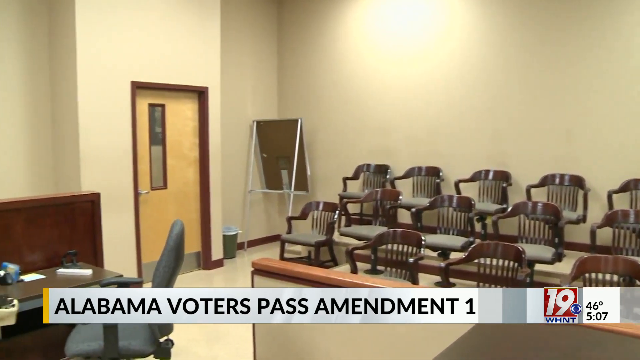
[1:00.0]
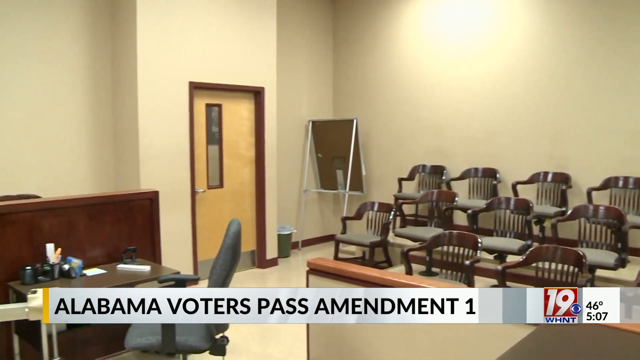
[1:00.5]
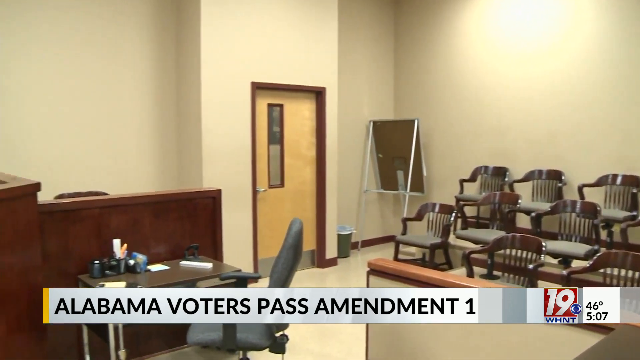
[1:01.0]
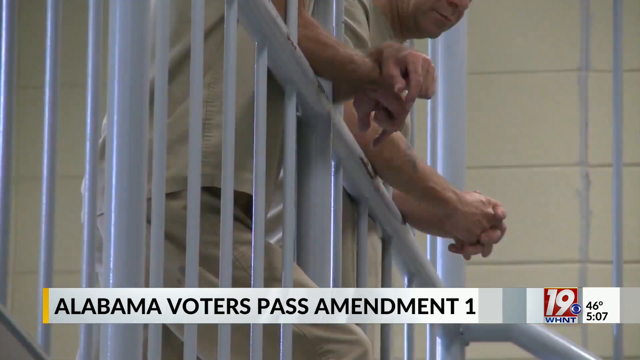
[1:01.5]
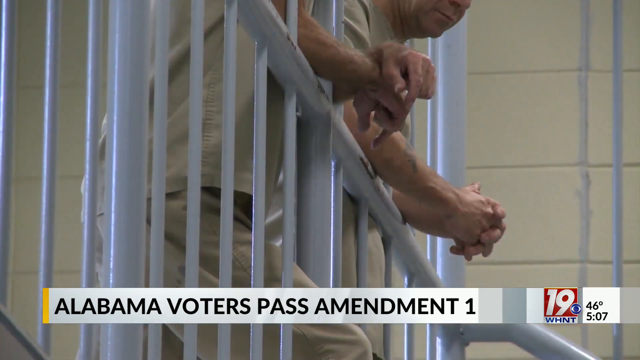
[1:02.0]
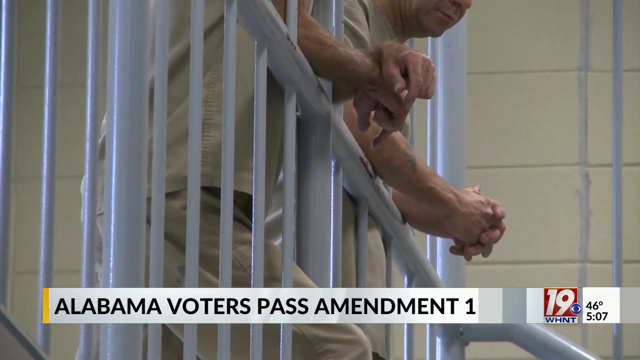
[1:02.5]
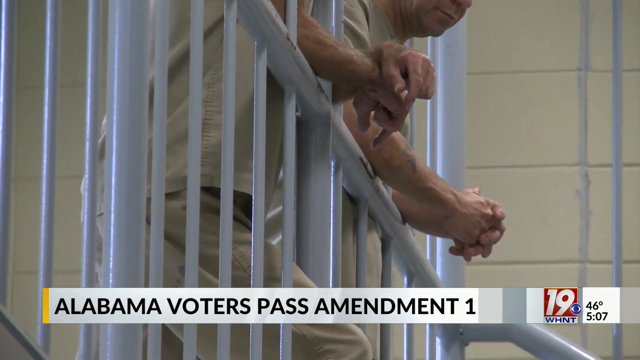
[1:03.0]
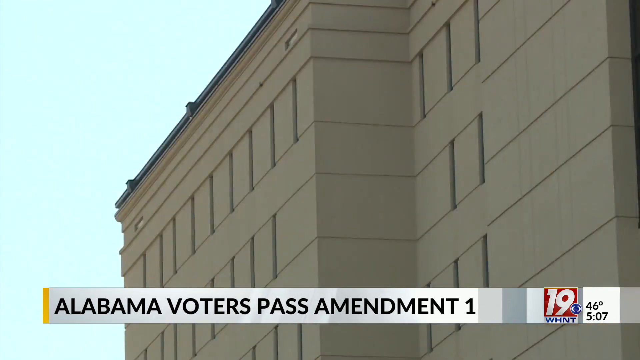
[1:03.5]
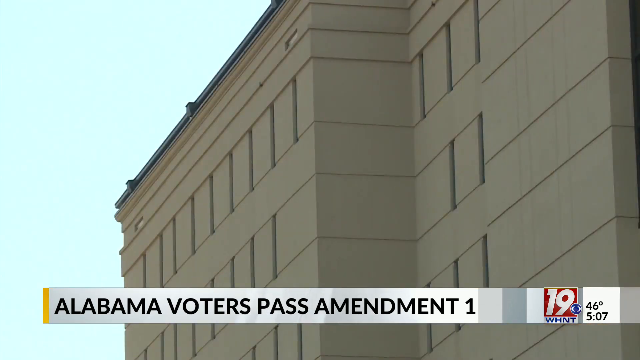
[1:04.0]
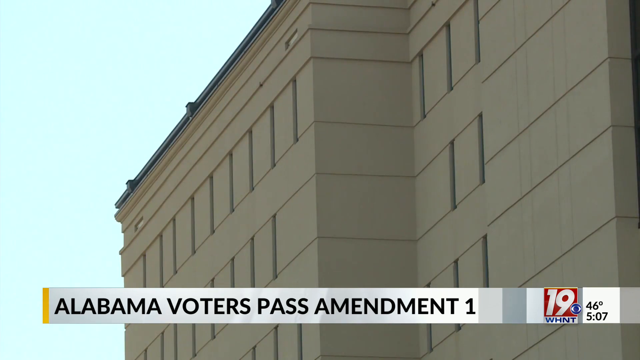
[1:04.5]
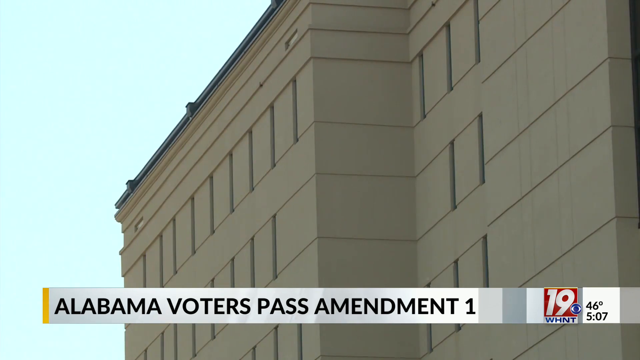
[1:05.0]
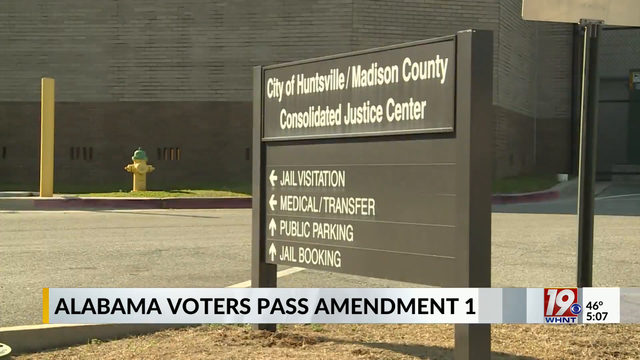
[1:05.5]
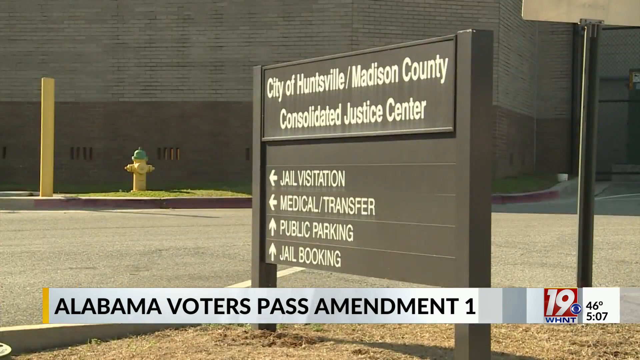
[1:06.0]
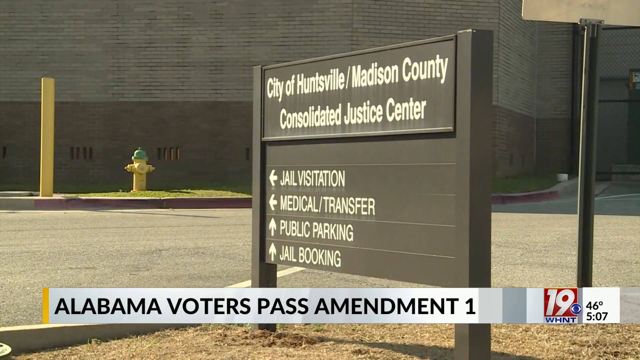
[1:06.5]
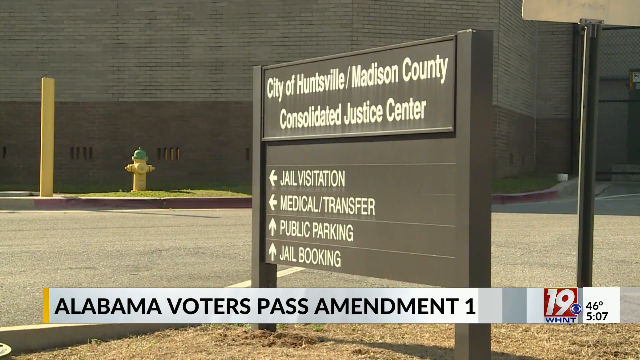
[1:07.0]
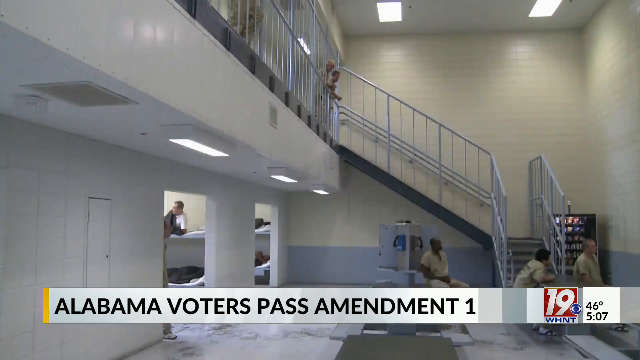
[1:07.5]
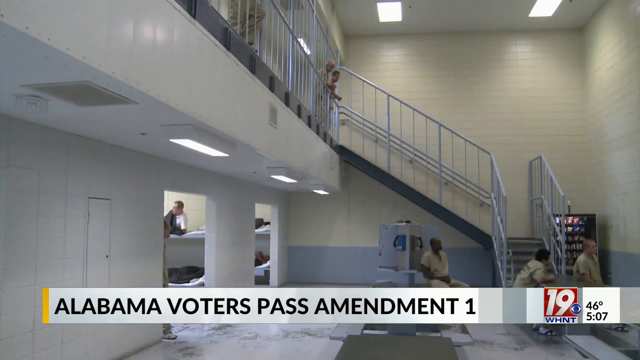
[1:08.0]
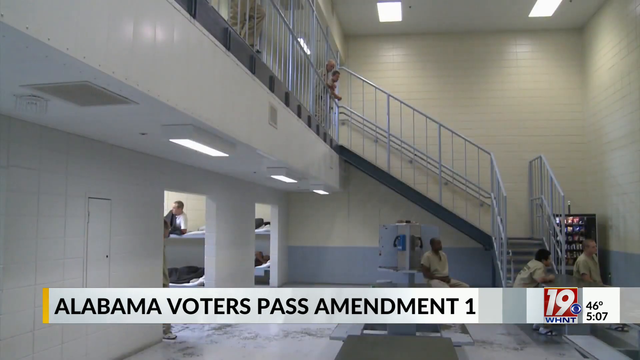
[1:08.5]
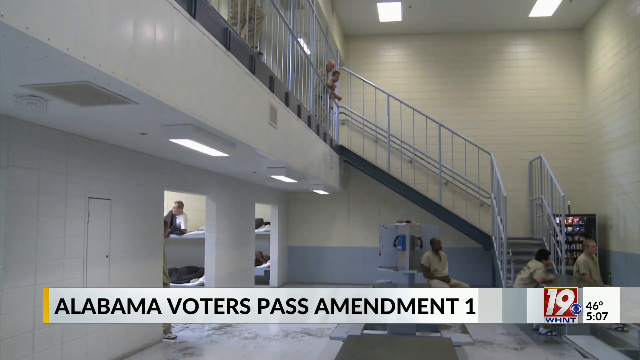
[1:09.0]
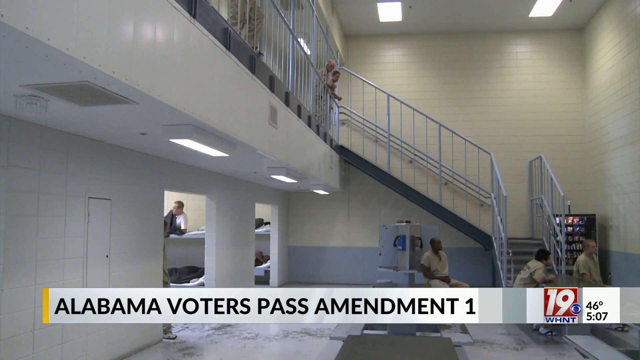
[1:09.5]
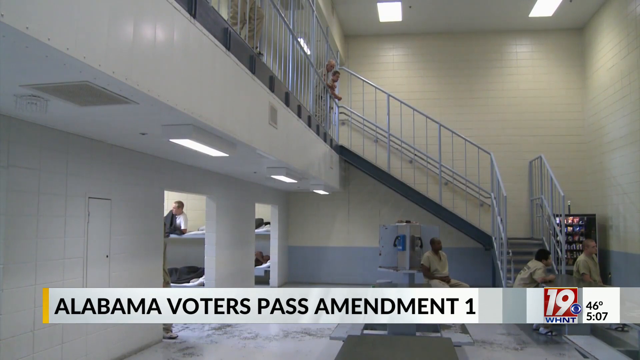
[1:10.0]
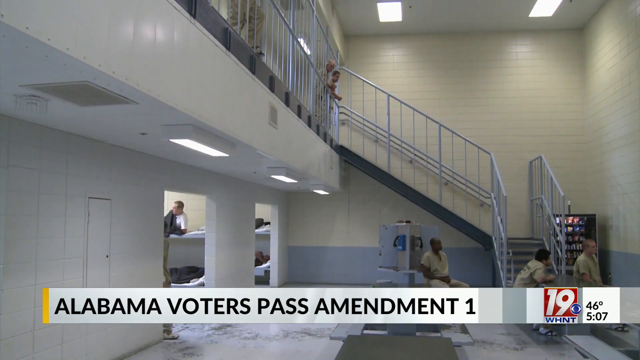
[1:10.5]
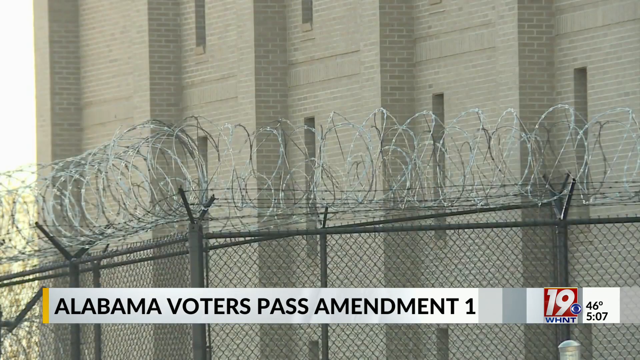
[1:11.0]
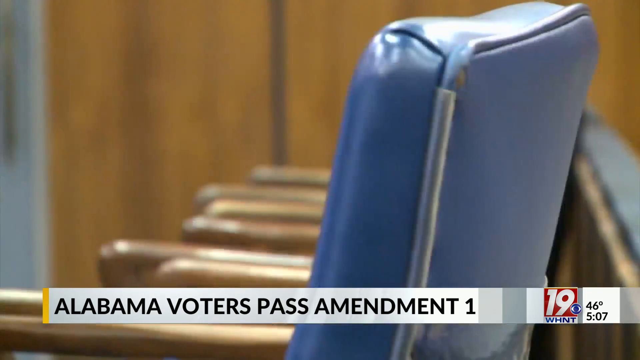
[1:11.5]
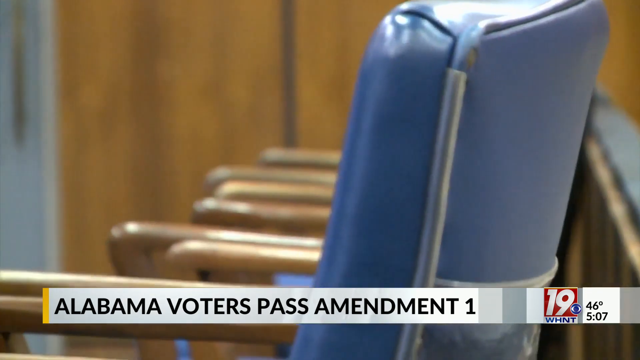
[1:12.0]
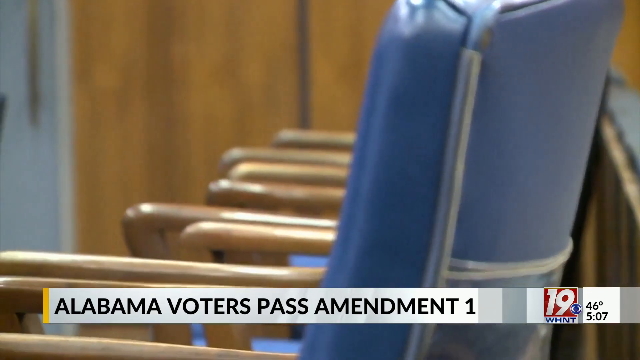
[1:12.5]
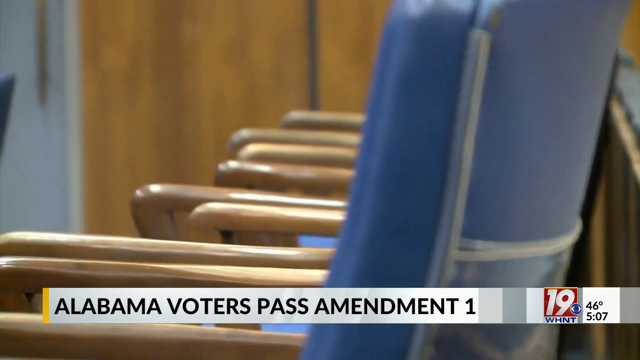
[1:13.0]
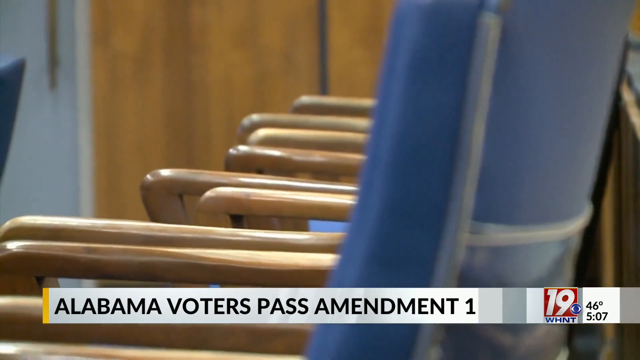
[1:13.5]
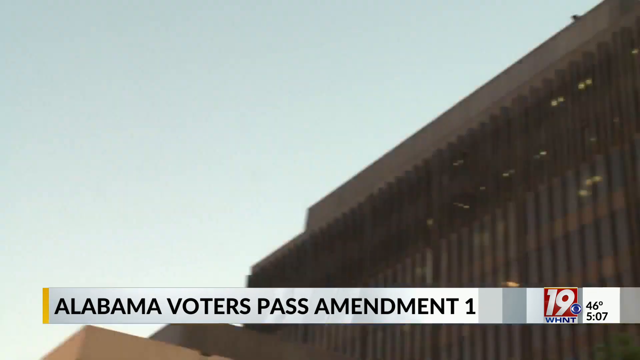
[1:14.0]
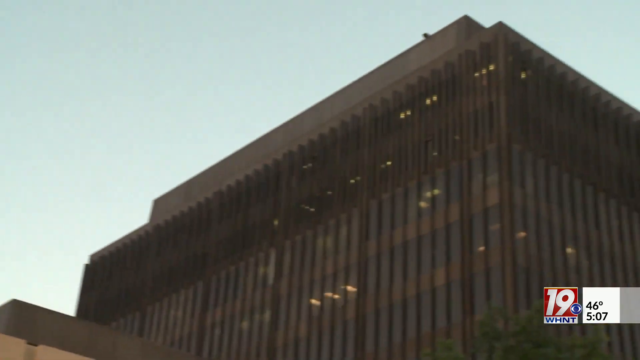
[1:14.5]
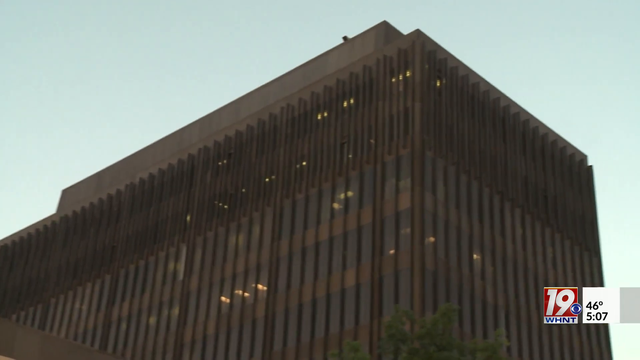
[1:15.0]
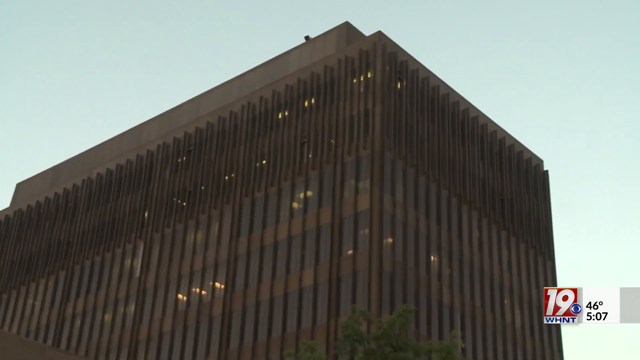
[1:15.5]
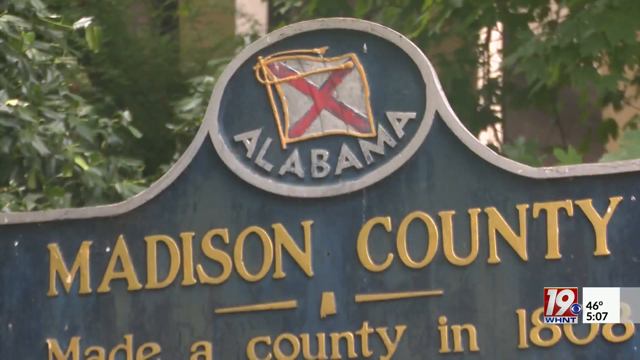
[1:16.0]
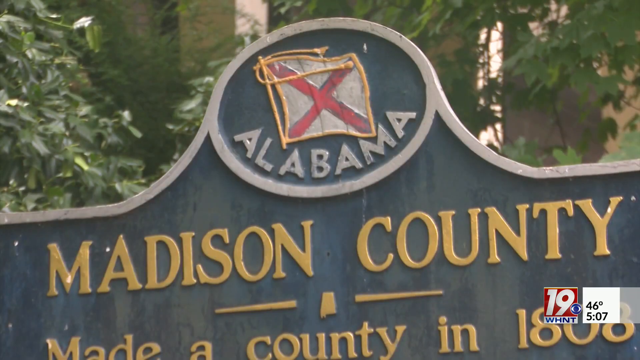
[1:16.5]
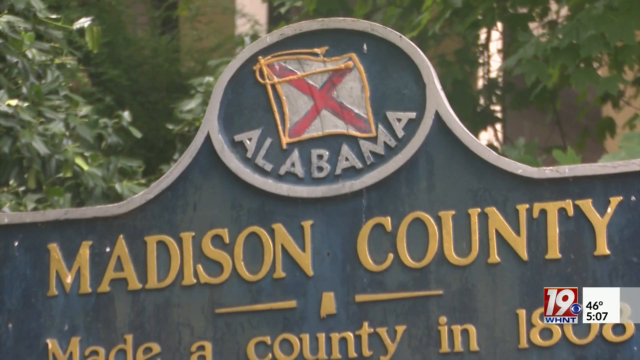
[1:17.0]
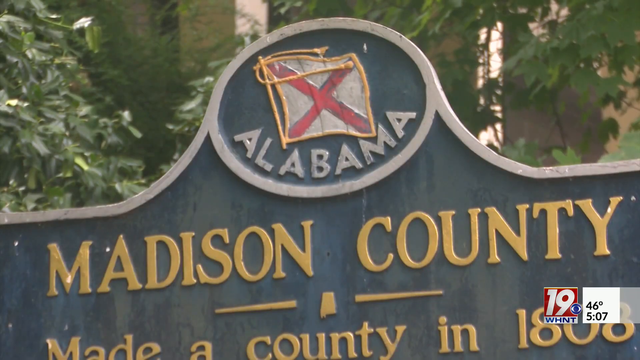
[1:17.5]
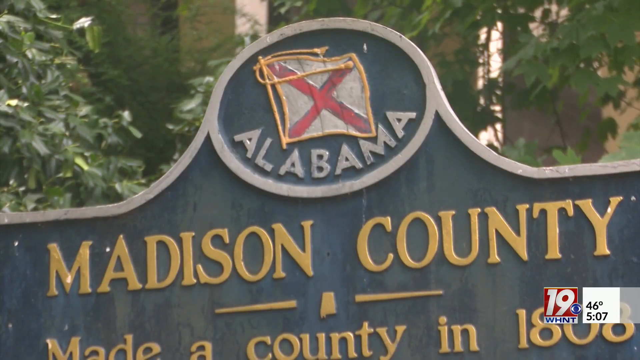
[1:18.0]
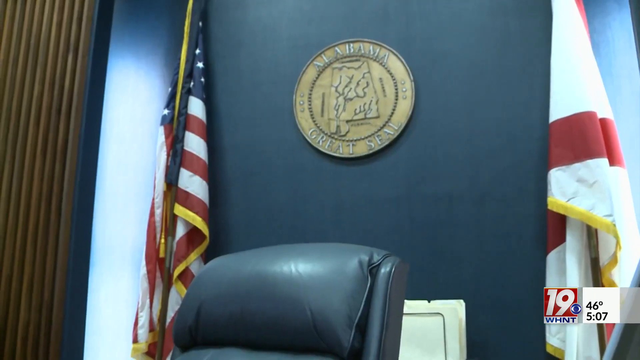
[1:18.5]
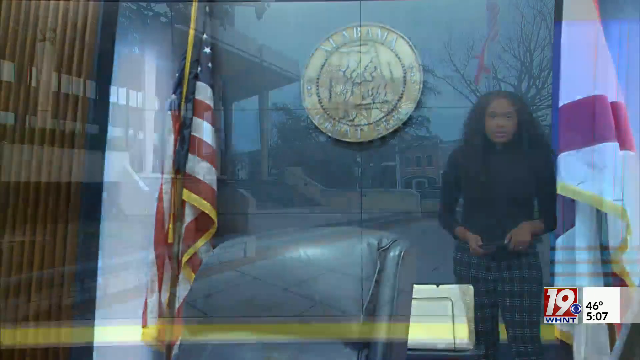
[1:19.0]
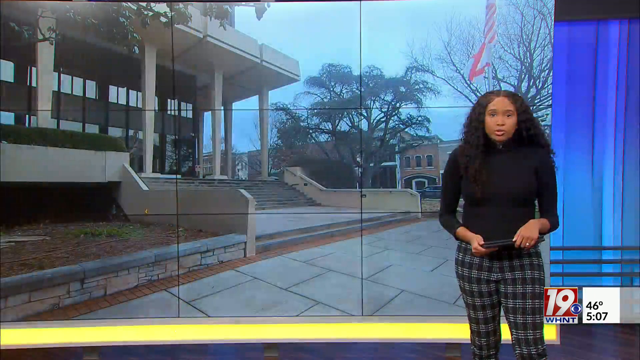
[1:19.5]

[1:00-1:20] The exterior of the Alabama courthouse is shown, with text underneath reading "Alabama voters pass amendment one". The broadcast is from channel 19 WHNT, a CBS affiliate, and the screen shows 46 degrees and the time 5:07. A sign outside the facility reads "City of Huntsville, Madison County Consolidated Justice Center", with jail visitation and medical transfer to the left, and public parking and jail booking straight ahead. Images of Madison County, Alabama and the courthouse follow, then the inside of a prison cell and various scenes inside prisons and inside the courtroom.